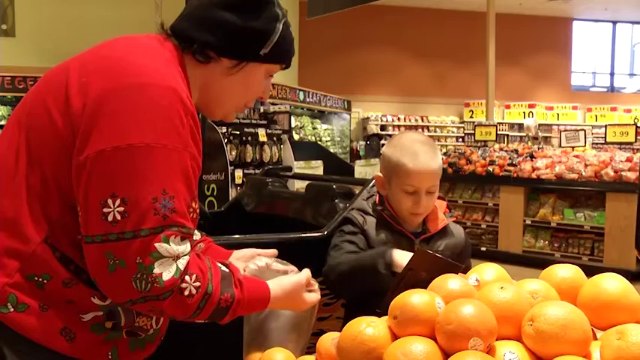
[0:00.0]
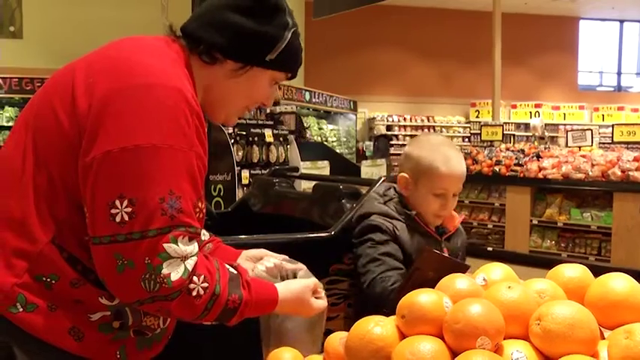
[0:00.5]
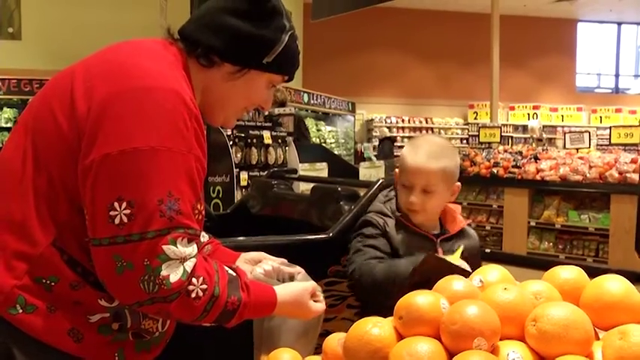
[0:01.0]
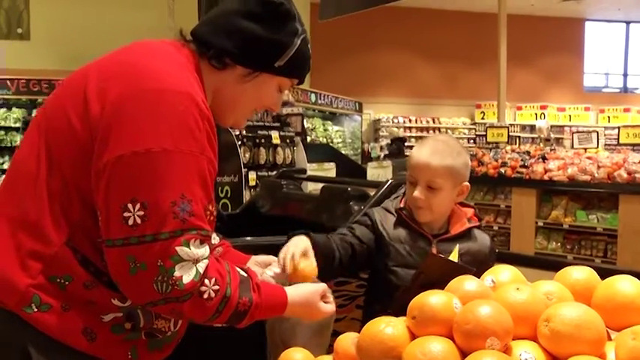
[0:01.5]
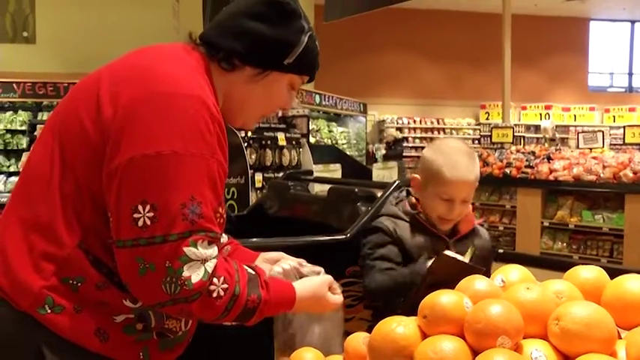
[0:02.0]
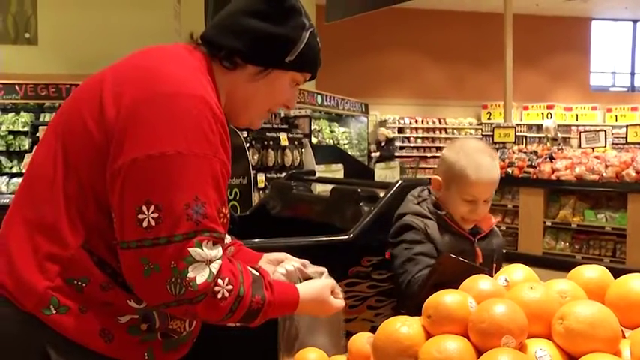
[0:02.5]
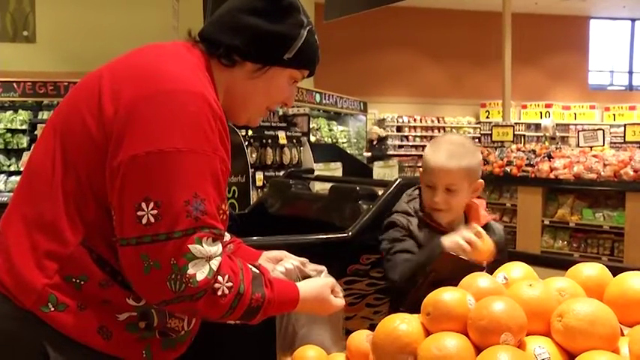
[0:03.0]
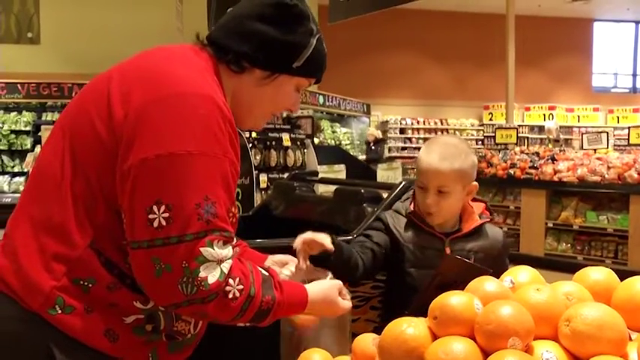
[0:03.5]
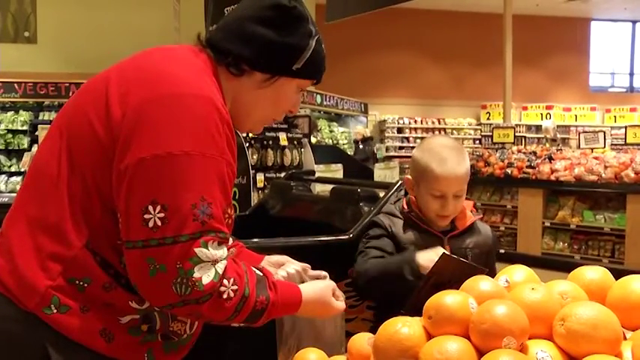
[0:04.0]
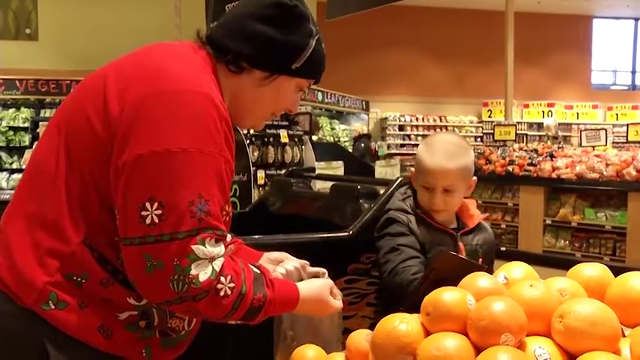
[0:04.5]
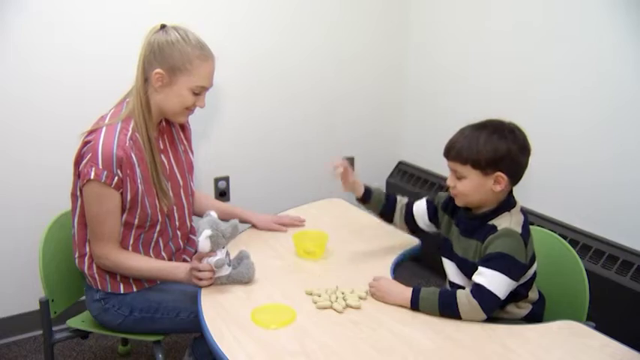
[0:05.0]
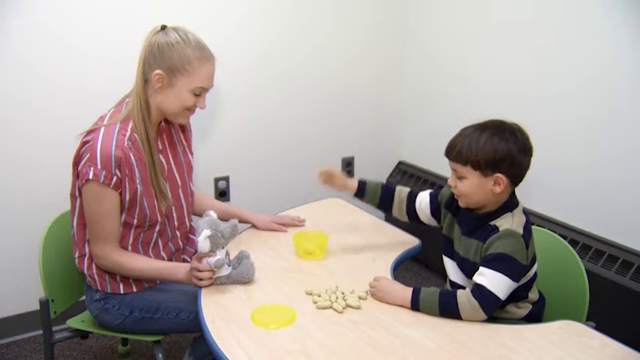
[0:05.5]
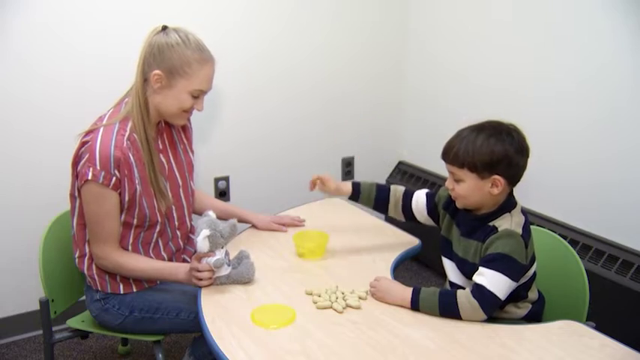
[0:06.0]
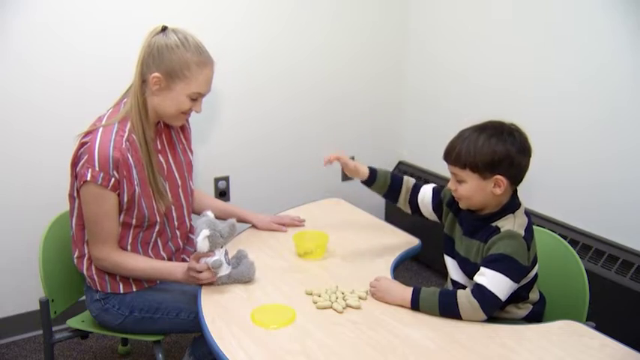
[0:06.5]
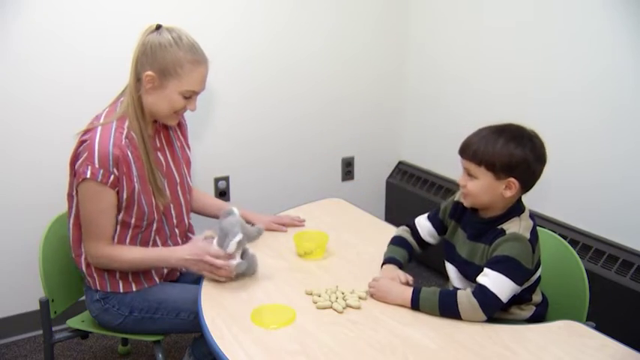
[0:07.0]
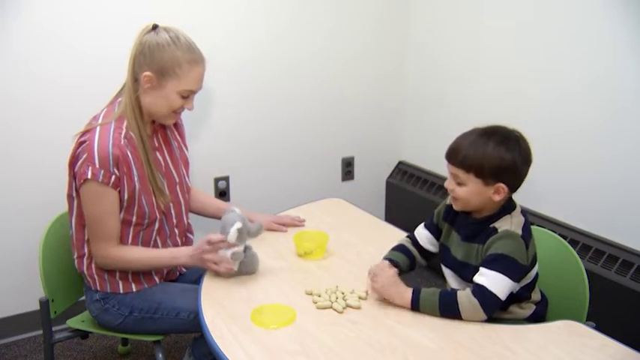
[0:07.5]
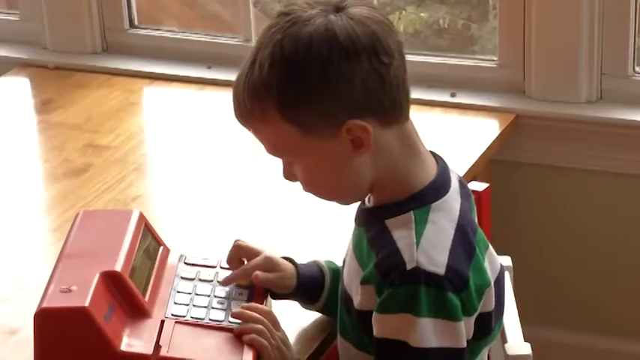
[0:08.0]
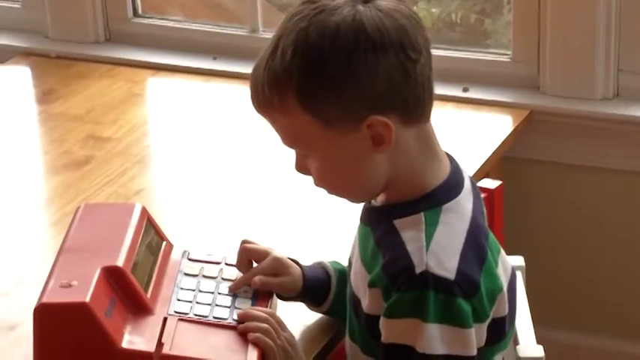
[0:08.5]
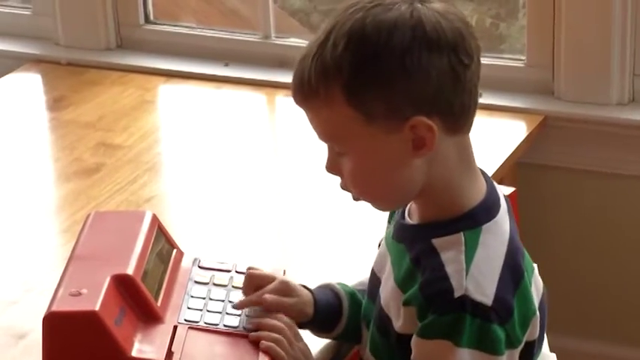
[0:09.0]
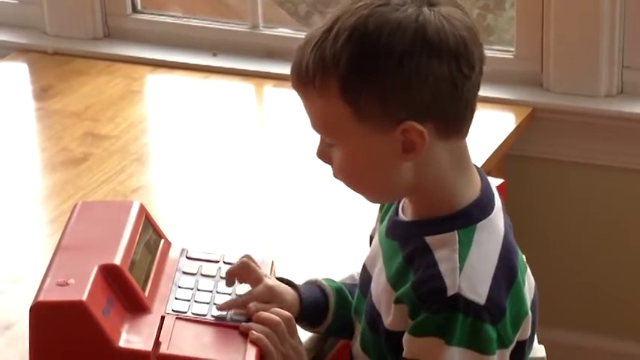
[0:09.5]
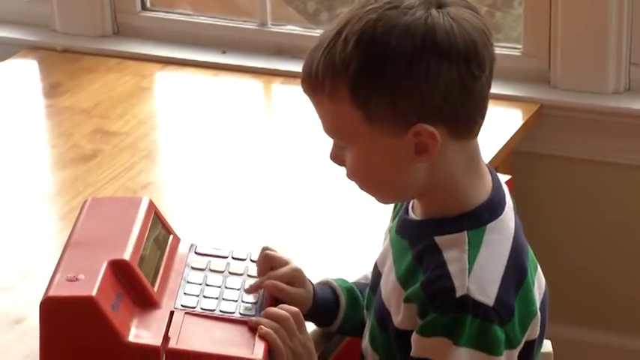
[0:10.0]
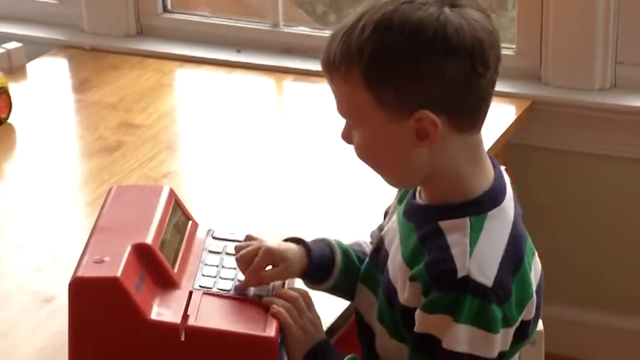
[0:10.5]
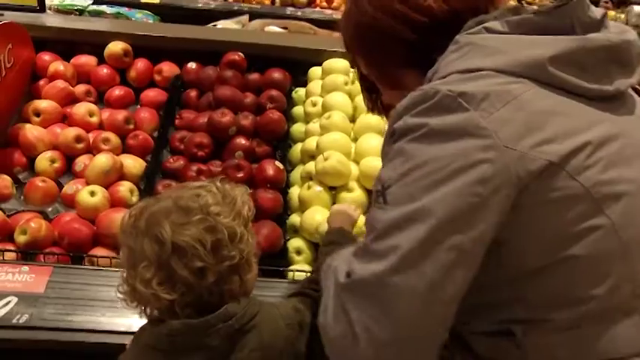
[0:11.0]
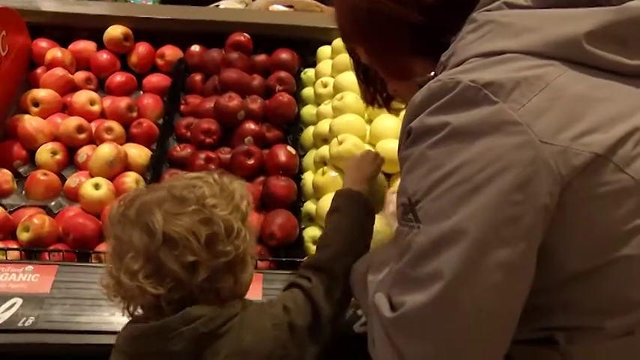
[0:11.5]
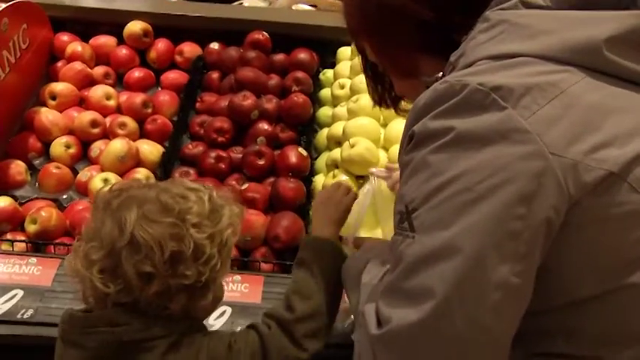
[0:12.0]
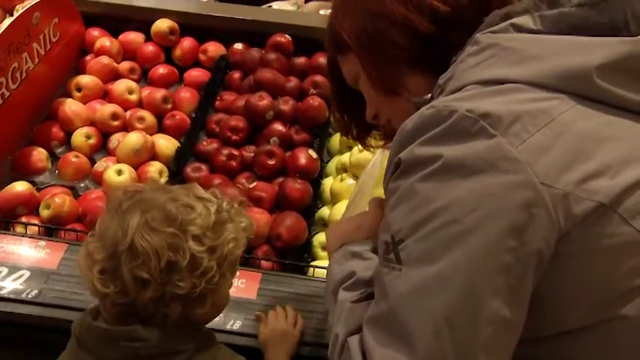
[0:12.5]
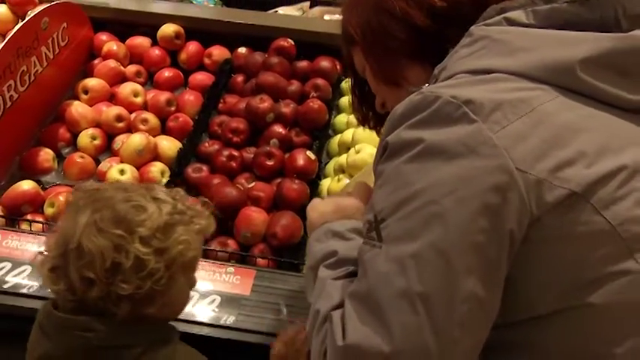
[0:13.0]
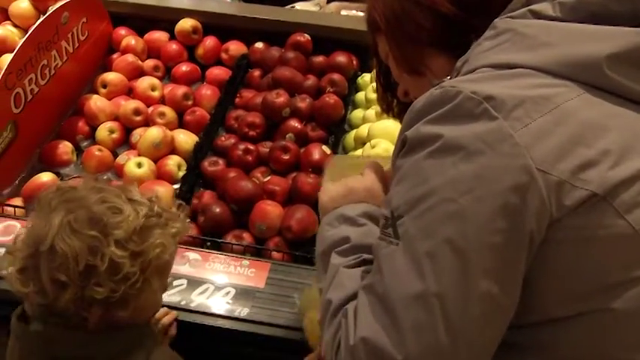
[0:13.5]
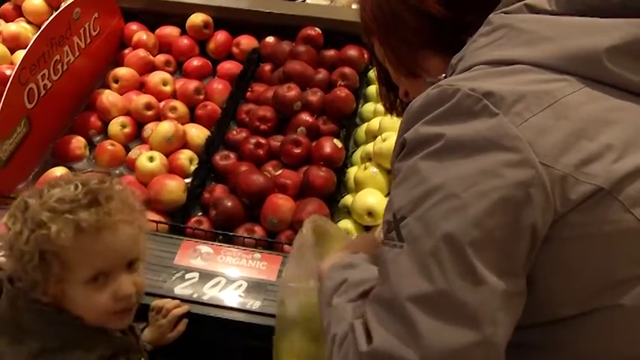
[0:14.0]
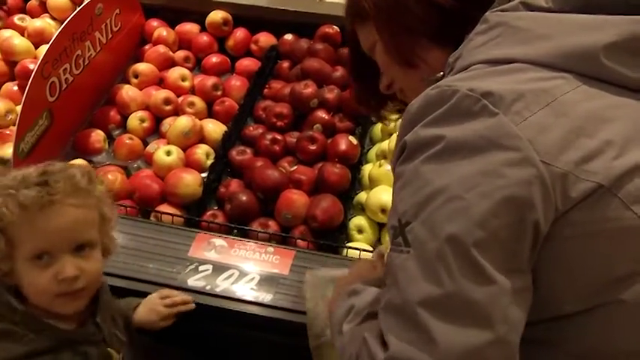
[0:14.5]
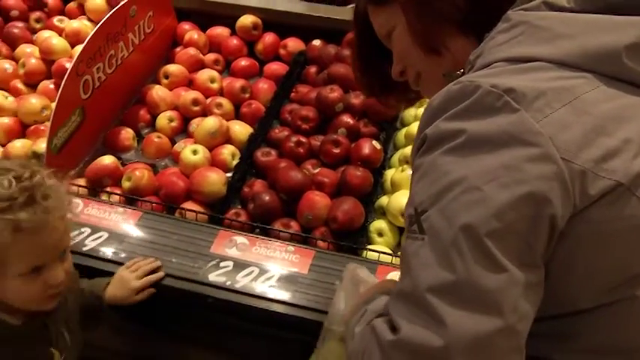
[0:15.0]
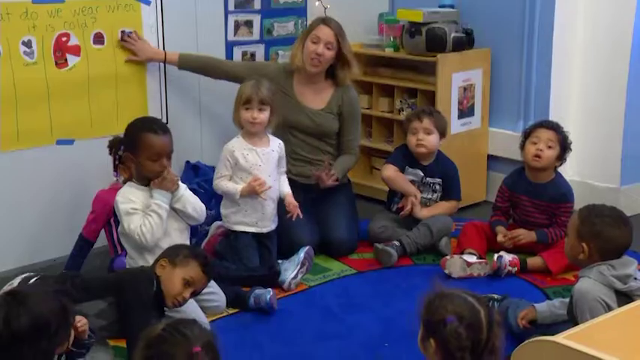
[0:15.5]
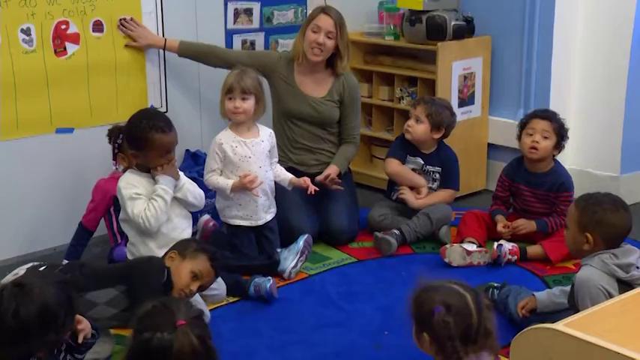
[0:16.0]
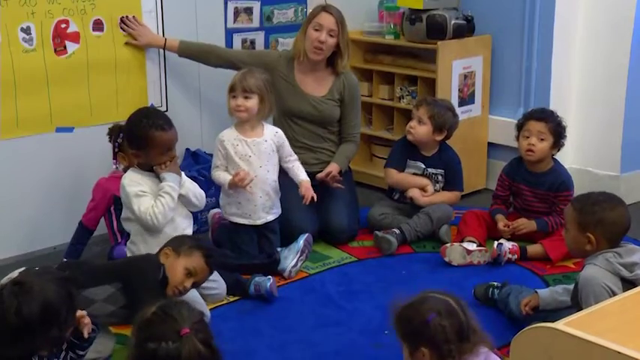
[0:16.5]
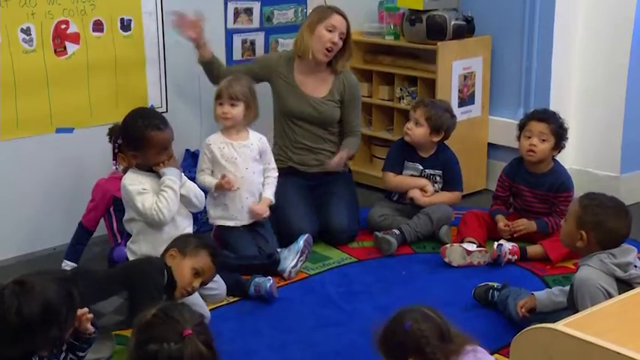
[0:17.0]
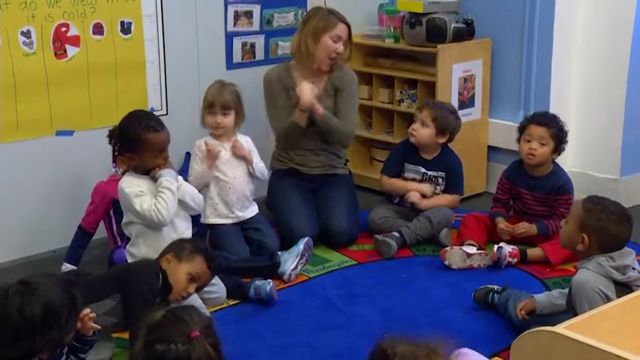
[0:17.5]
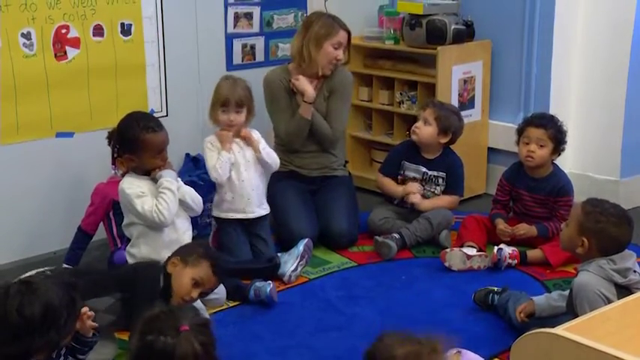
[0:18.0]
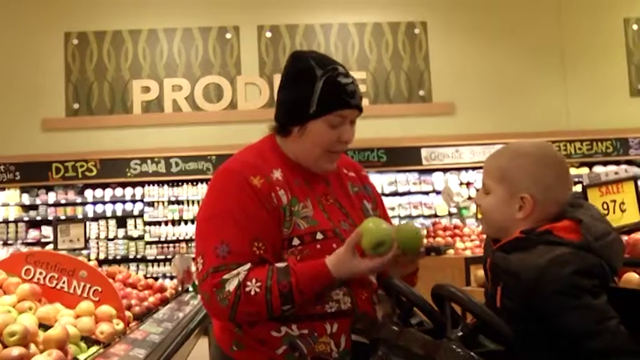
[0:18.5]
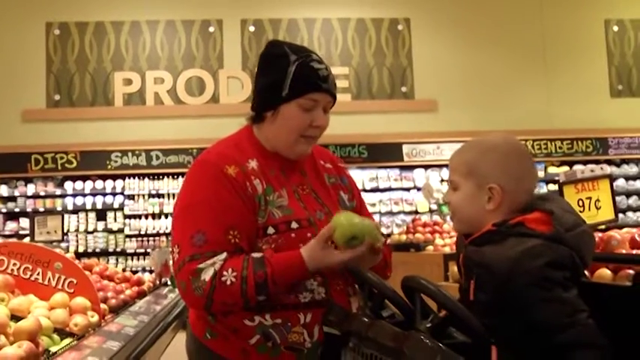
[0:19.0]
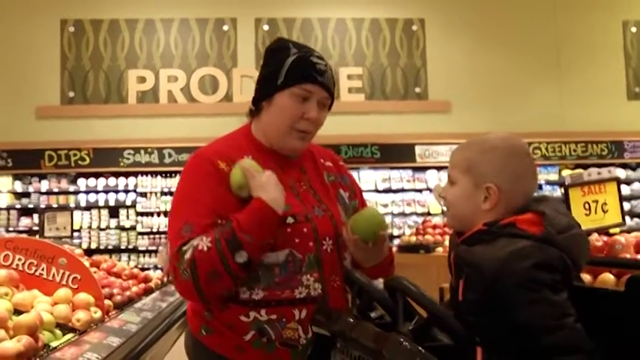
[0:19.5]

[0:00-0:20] In a supermarket there are two people: a boy with blond hair and an older person wearing a hat, with a little long hair, whose gender is hard to tell. The older person seems to hold an open plastic bag while the boy puts oranges inside. Next, what appears to be a teacher or a psychologist is with a boy in a completely white room that looks like a police interrogation room. The teacher has blond hair, and the boy plays with an elephant doll; in front of him are nuts, peanuts. Then a boy plays with a toy from a register box in his house. After that, a girl's mother helps her grab and choose yellow apples. A school scene follows, with a teacher surrounded by several children who seem to be listening to her carefully. Then the parent and the son from the beginning talk, while the parent has two apples in her hands.